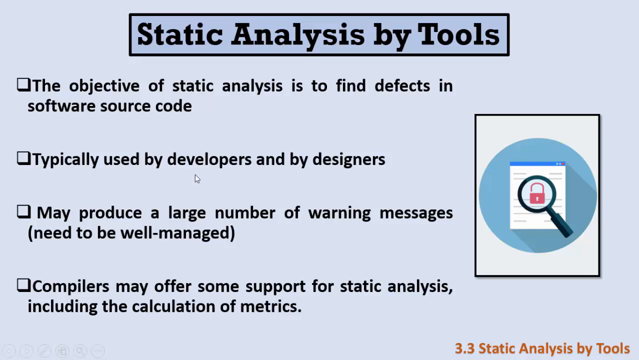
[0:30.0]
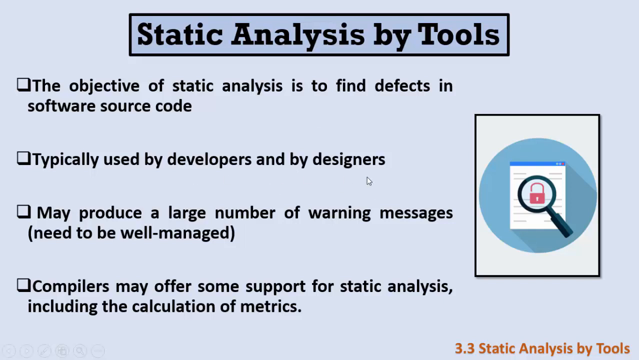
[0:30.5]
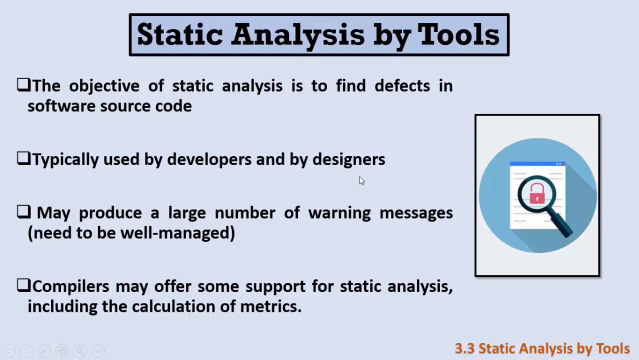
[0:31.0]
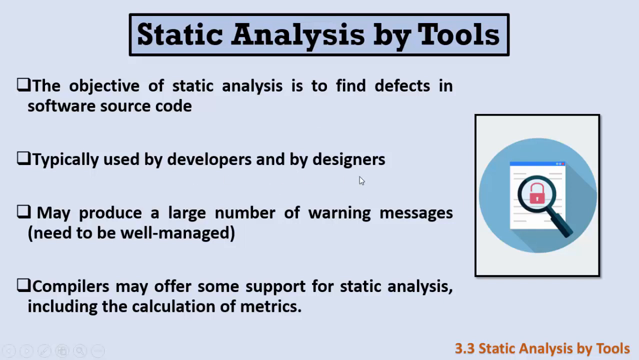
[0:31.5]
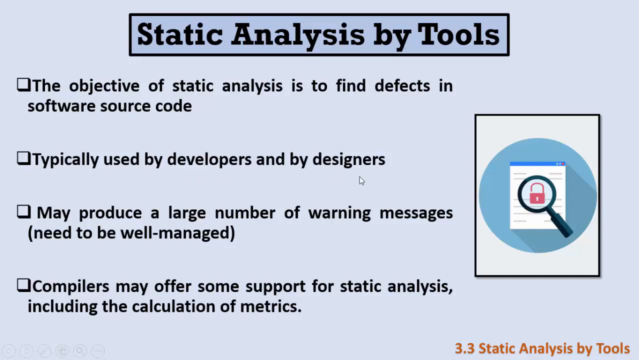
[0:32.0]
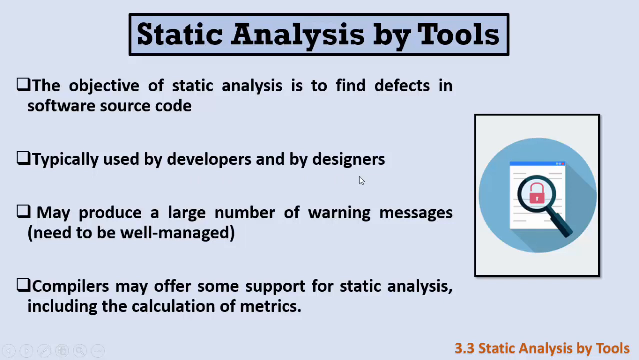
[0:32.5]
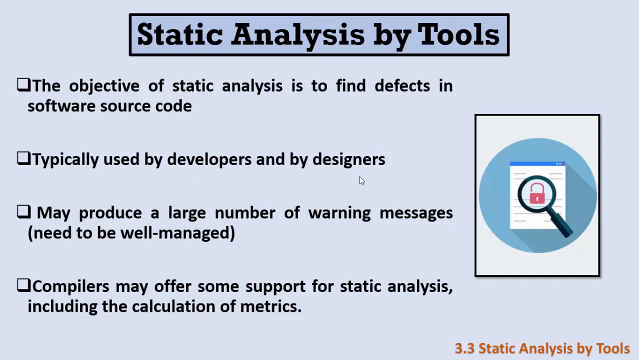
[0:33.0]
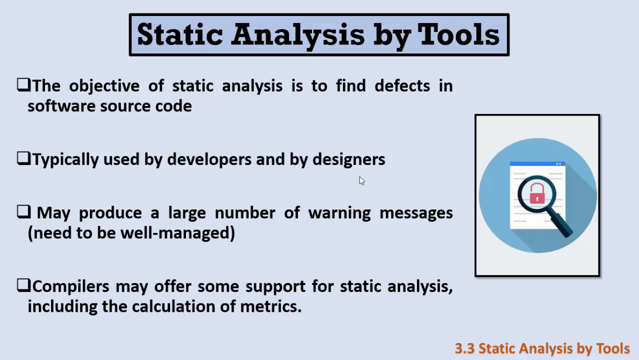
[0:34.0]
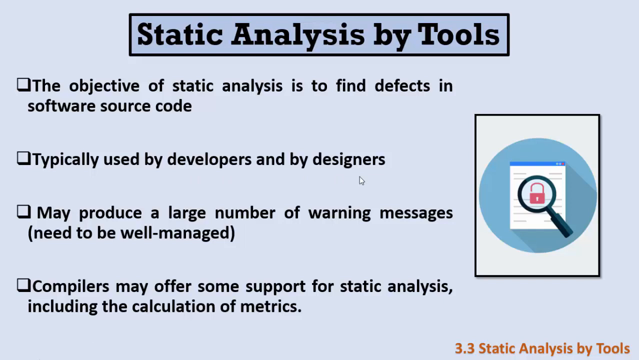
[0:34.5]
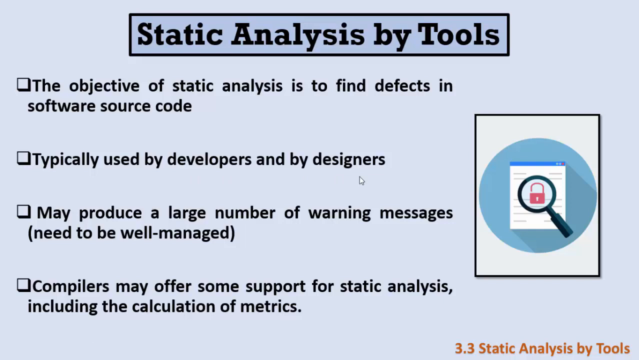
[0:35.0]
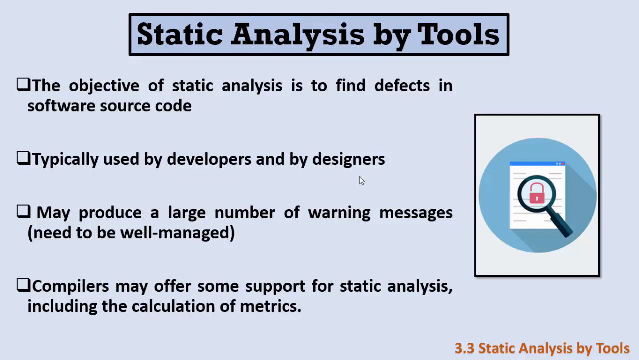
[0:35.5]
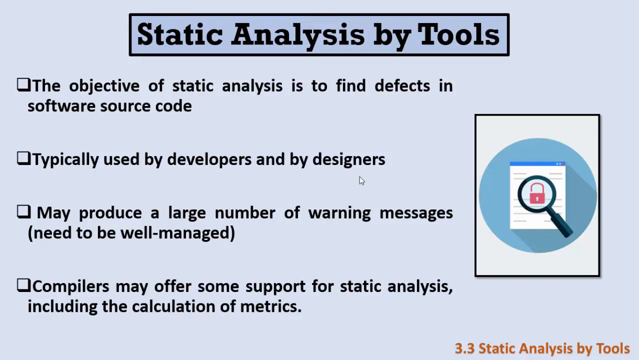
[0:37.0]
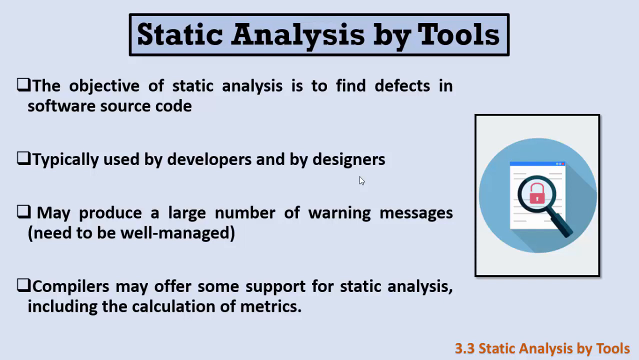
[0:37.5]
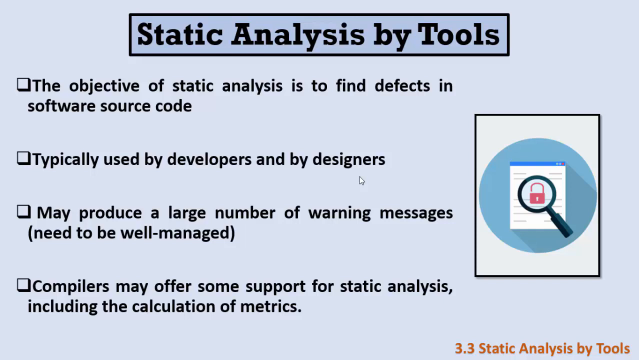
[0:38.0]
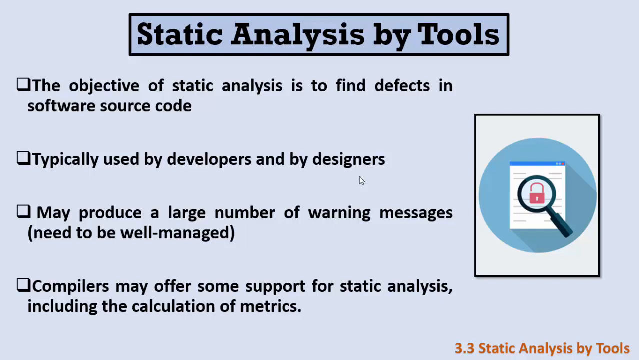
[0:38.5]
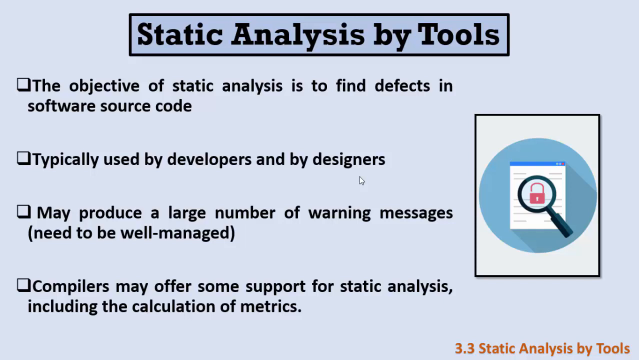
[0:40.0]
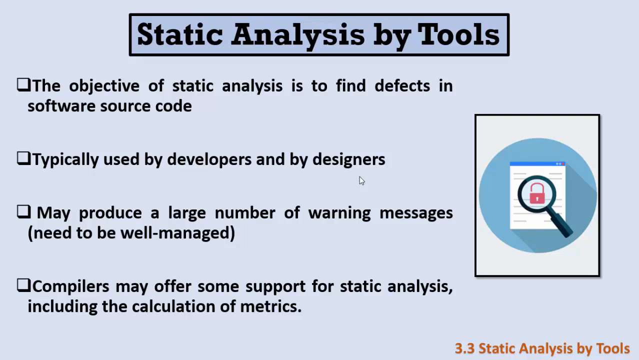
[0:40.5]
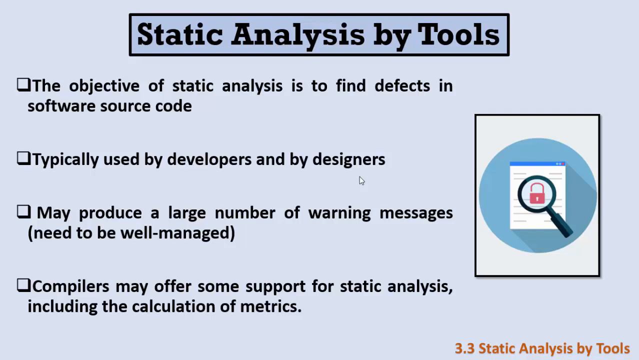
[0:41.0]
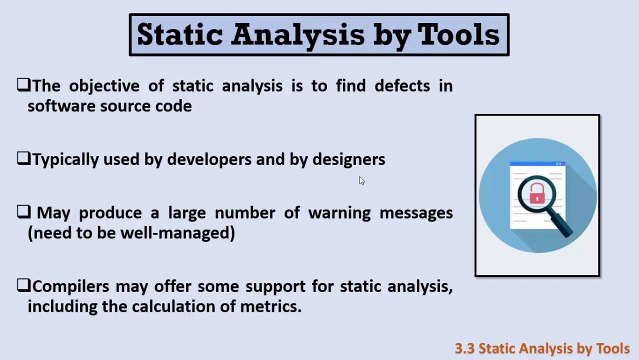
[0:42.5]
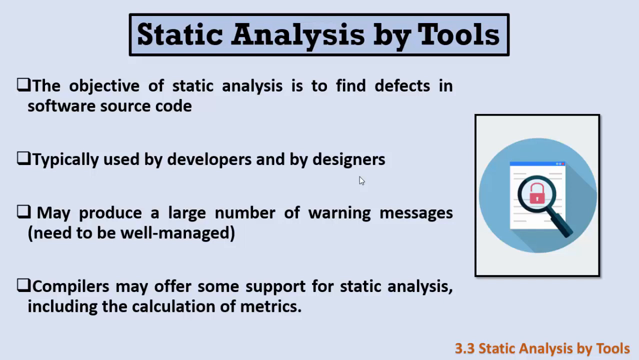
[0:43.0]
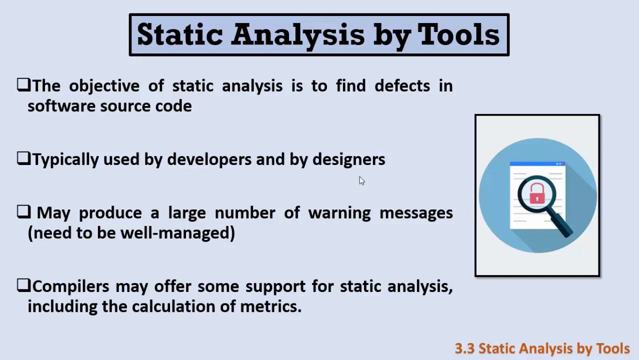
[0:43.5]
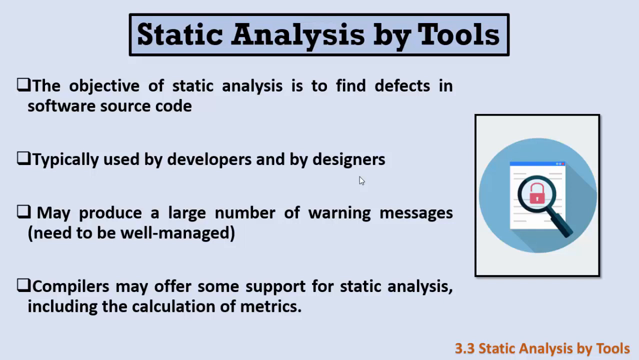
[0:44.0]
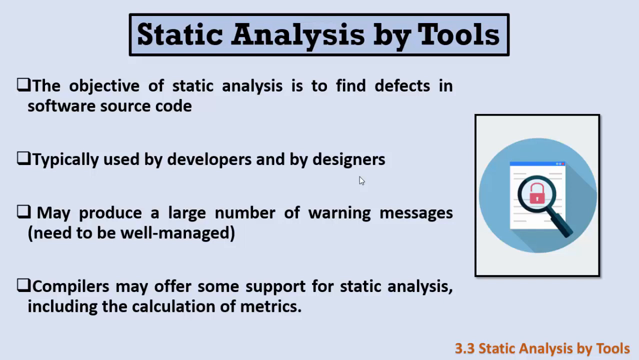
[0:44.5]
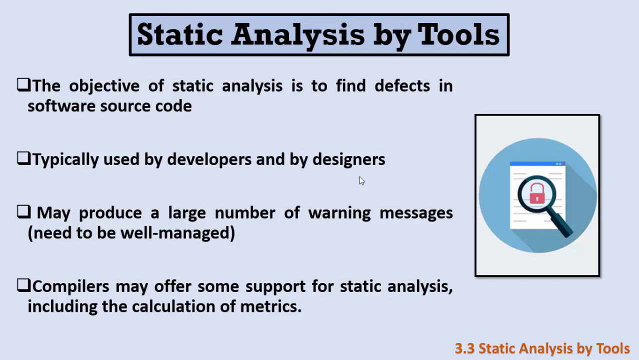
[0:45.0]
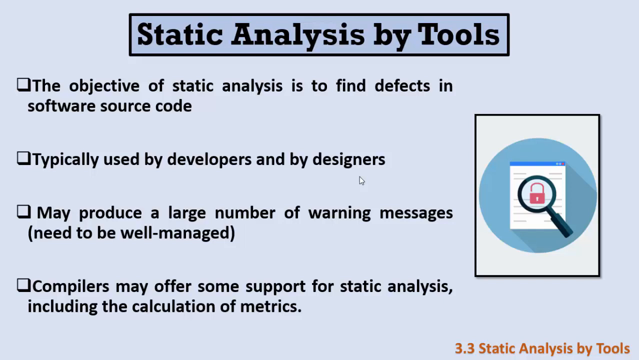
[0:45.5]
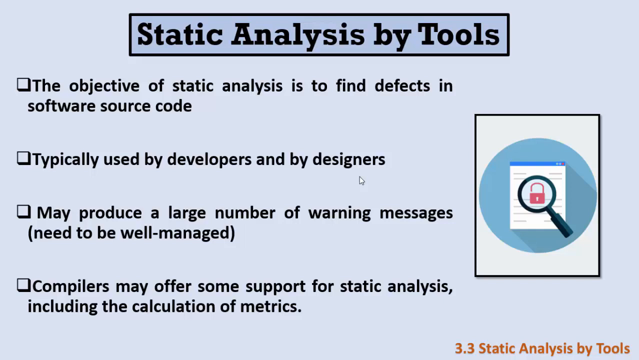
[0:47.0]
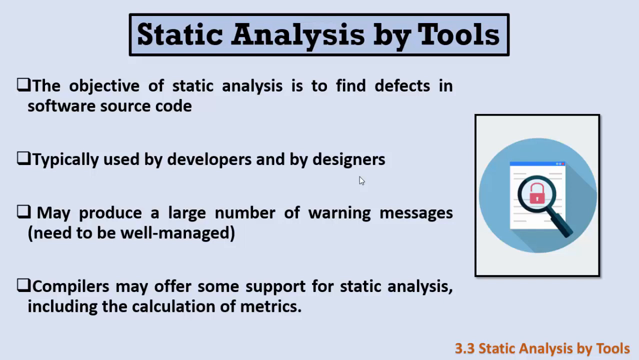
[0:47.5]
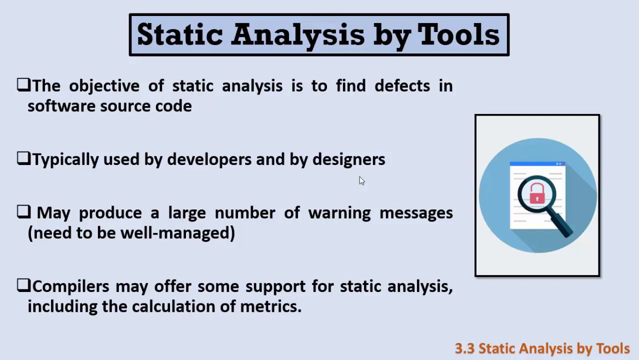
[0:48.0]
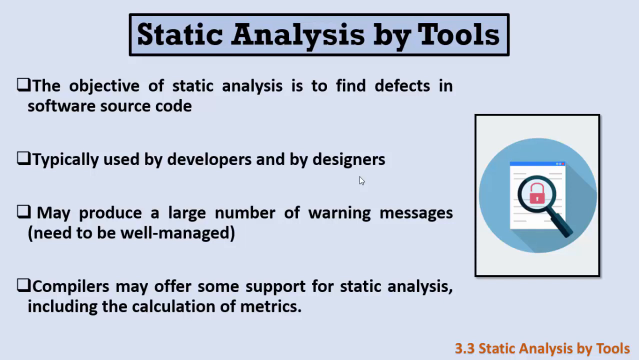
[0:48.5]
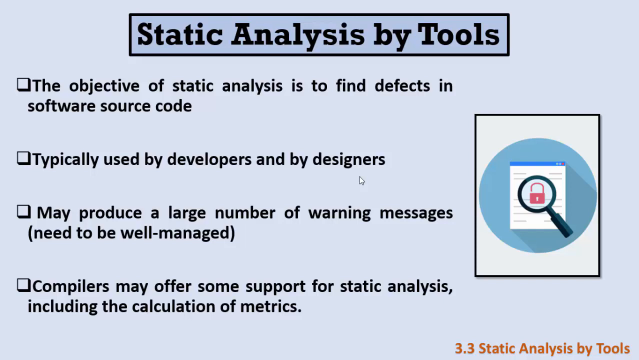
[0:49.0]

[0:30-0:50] The same screen continues, with black text on a light bluish-gray background under the heading "Static Analysis by Tools". It lists four points: "the objective of static analysis is to find defects in software source code", "typically used by developers and by designers", "may produce a large number of warning messages, need to be well-managed", and "compilers may offer some support for static analysis, including the calculation of metrics". On the right side of the page is a white vertical rectangle and a blue circle, and inside this is an image of a screen or document with a pink padlock in the center and a magnifying glass over the top. The text and image stay static. The only movement is the cursor, shown as an arrow, moving around the text and circling or underlining parts of it.